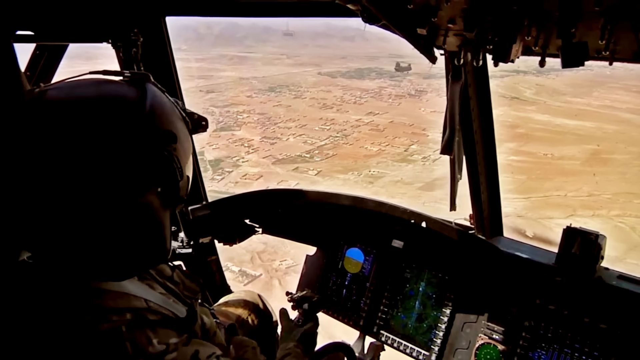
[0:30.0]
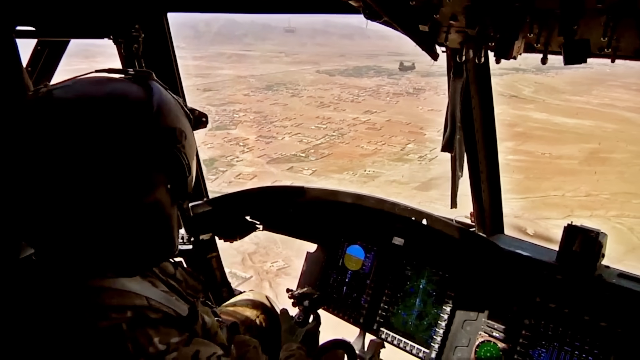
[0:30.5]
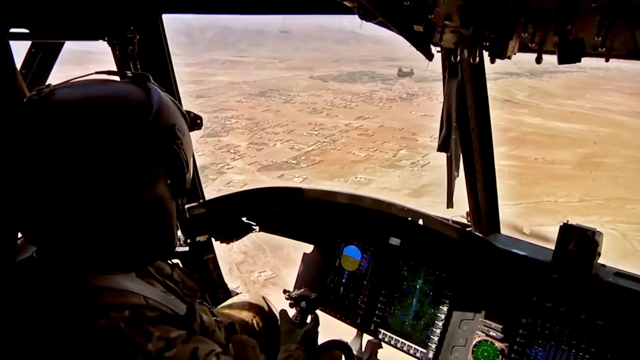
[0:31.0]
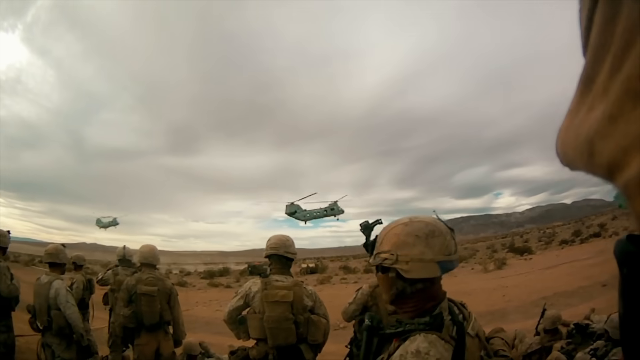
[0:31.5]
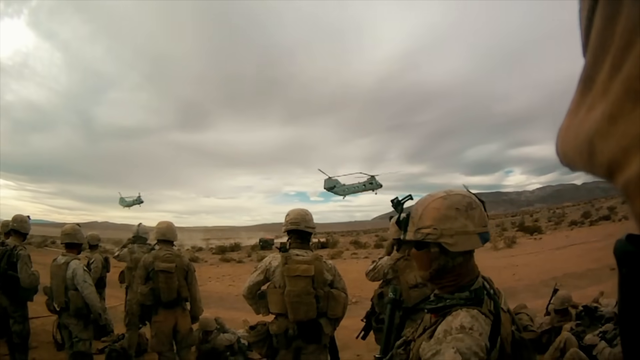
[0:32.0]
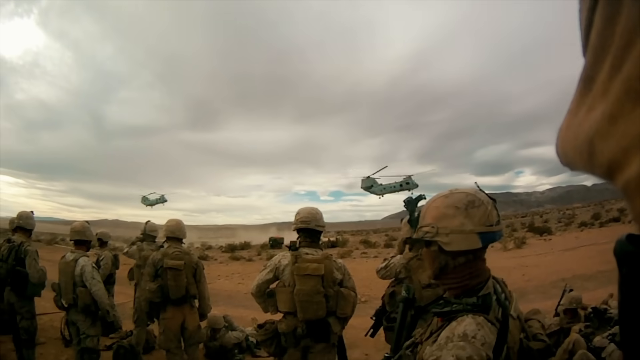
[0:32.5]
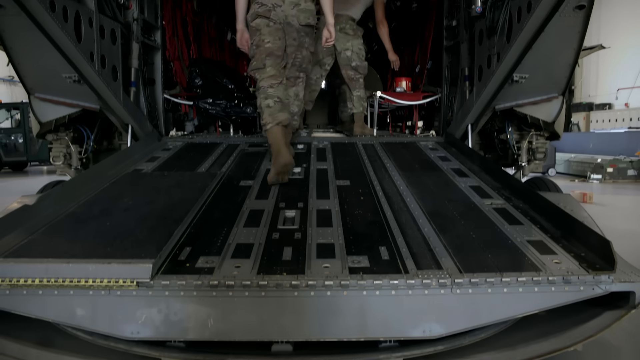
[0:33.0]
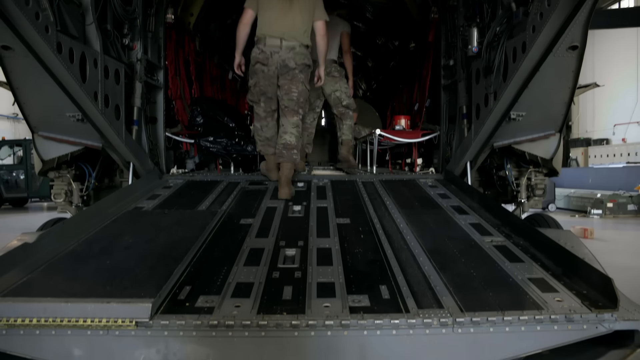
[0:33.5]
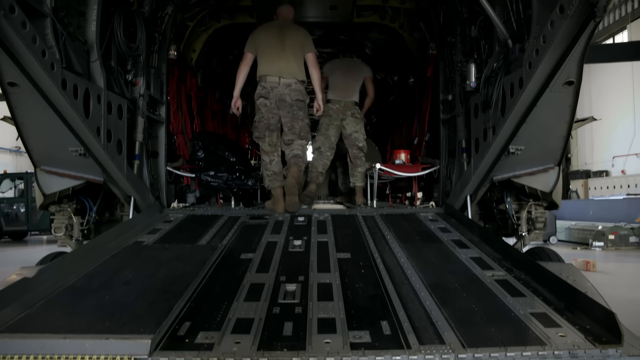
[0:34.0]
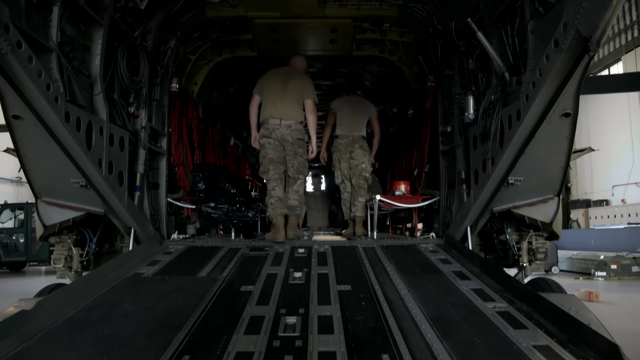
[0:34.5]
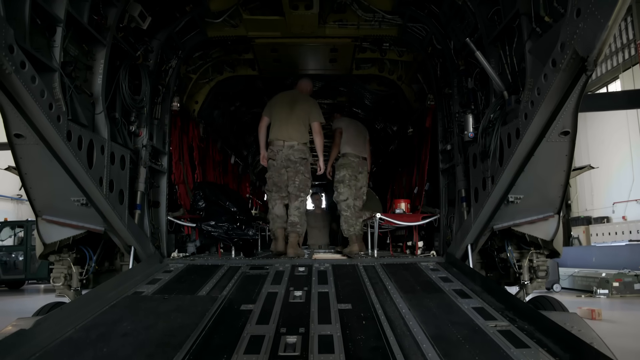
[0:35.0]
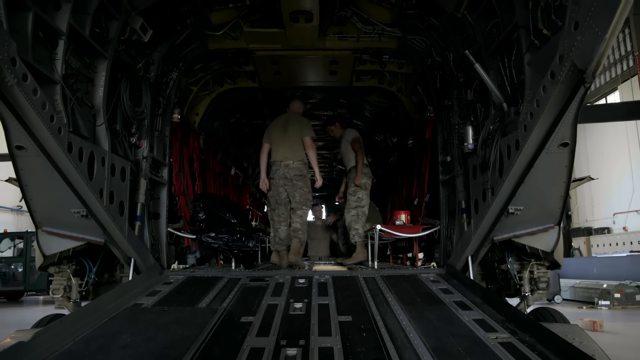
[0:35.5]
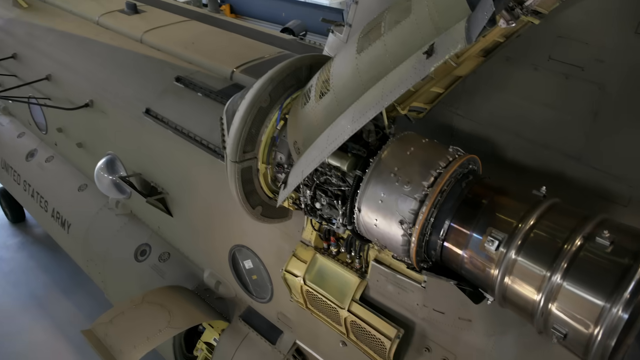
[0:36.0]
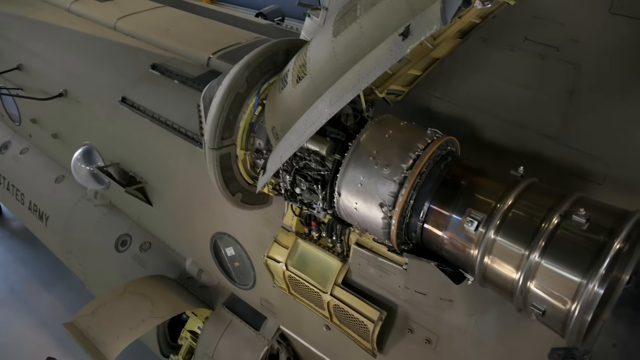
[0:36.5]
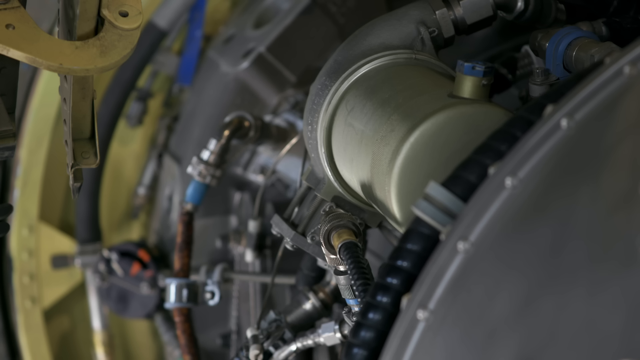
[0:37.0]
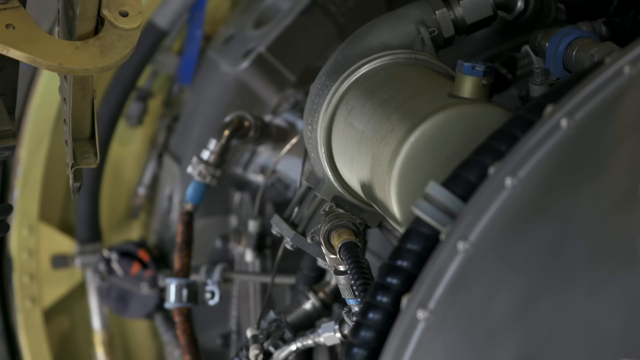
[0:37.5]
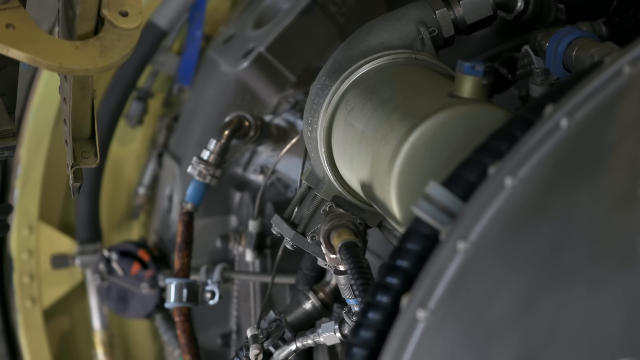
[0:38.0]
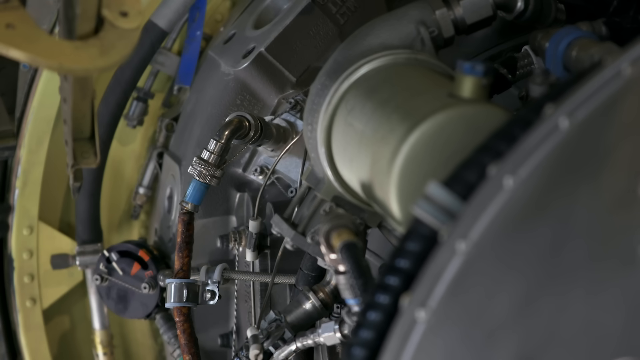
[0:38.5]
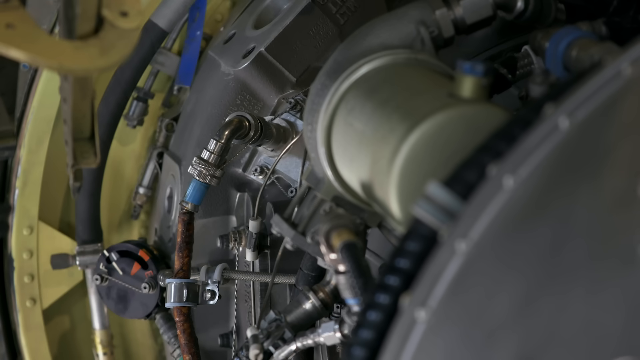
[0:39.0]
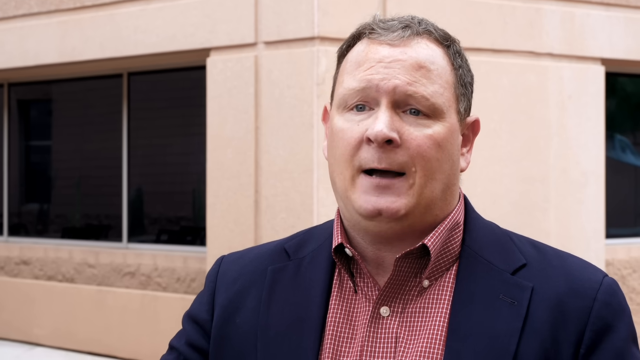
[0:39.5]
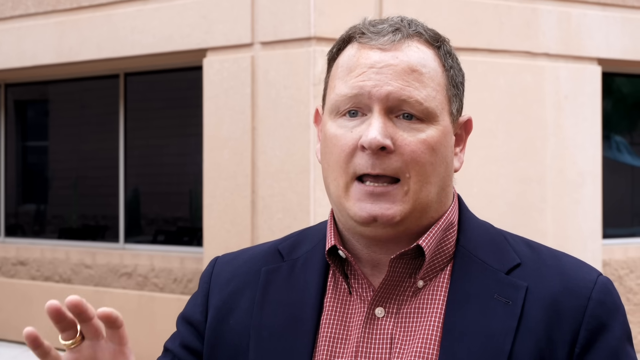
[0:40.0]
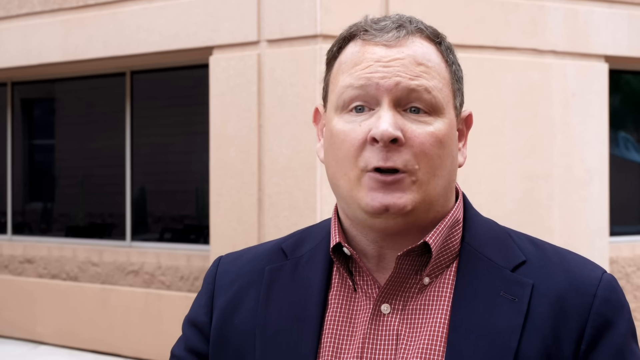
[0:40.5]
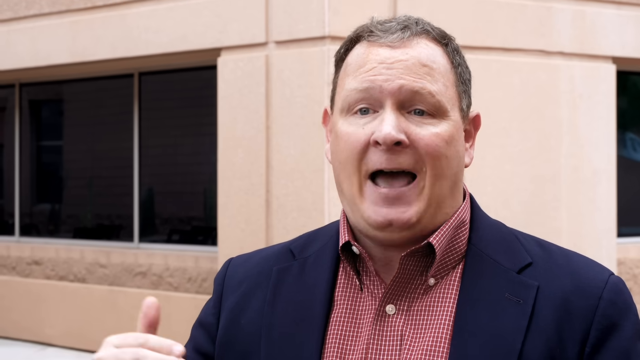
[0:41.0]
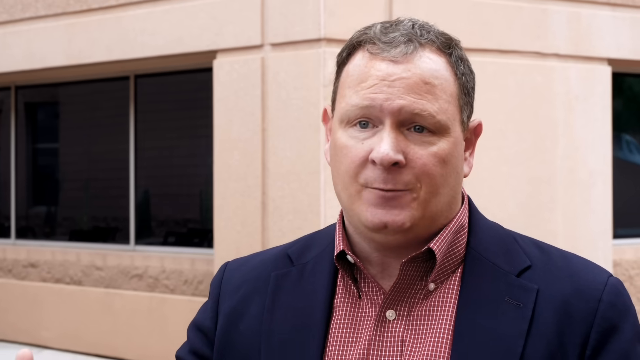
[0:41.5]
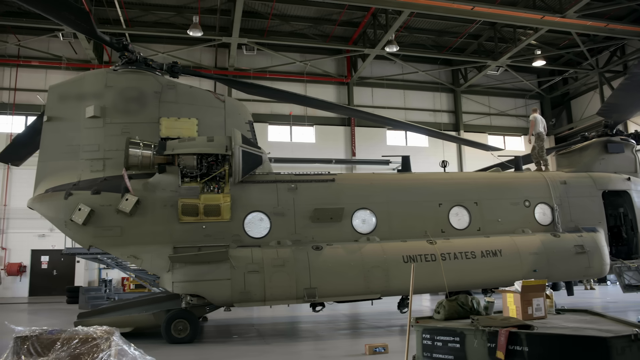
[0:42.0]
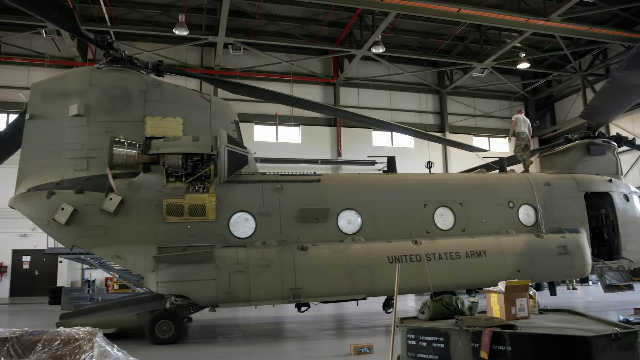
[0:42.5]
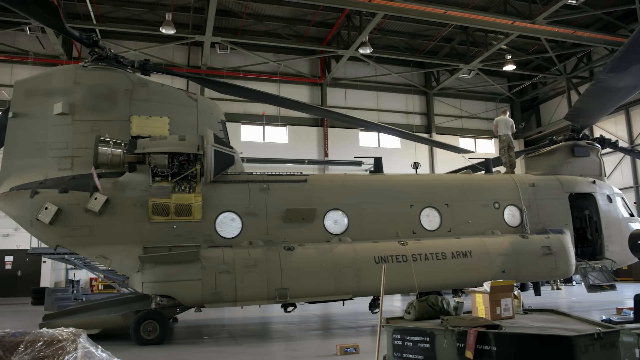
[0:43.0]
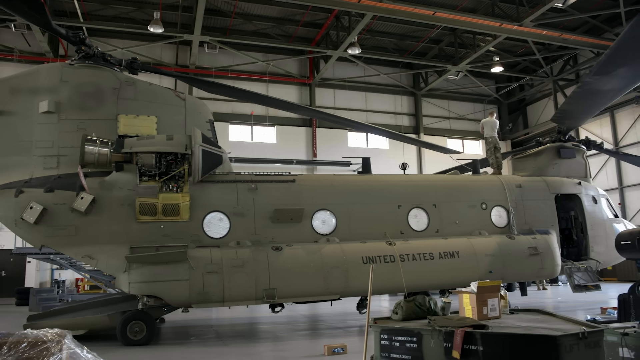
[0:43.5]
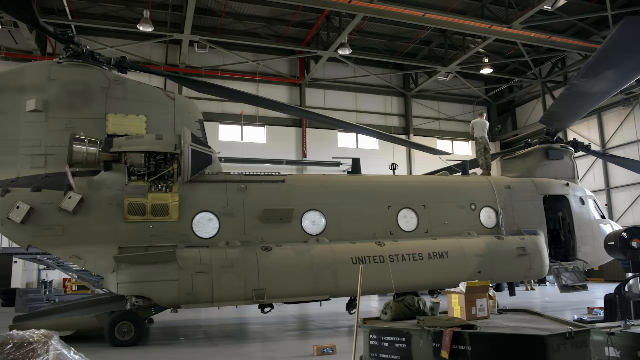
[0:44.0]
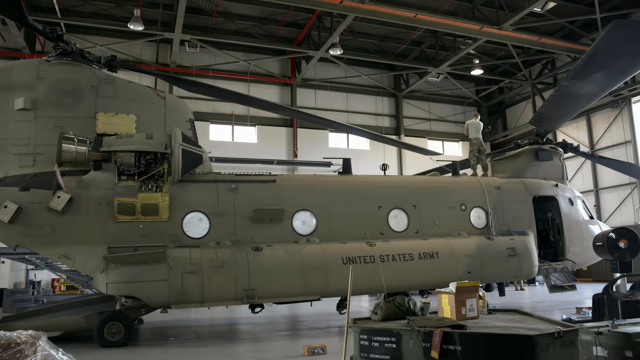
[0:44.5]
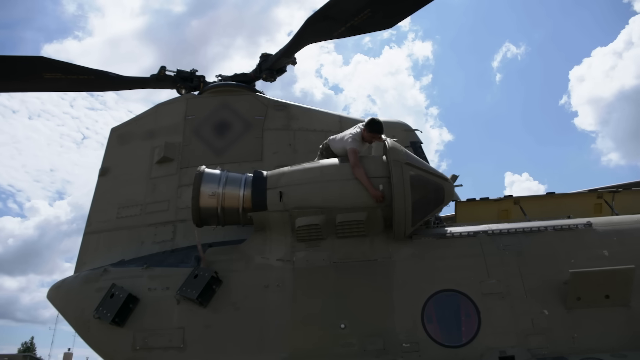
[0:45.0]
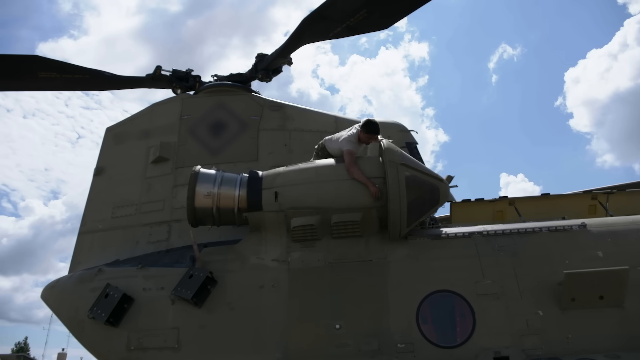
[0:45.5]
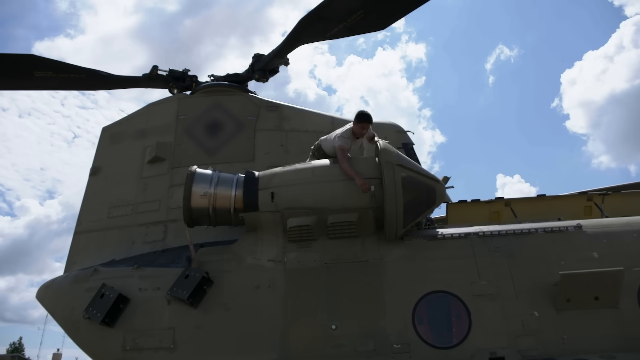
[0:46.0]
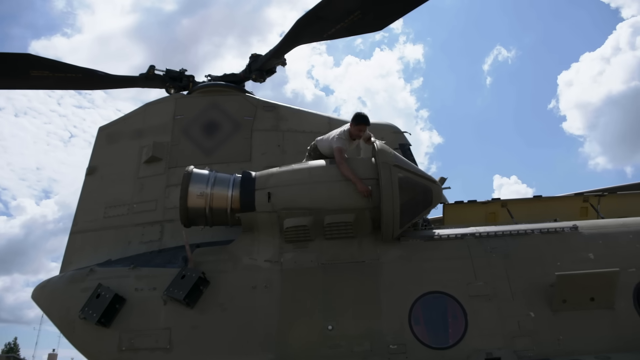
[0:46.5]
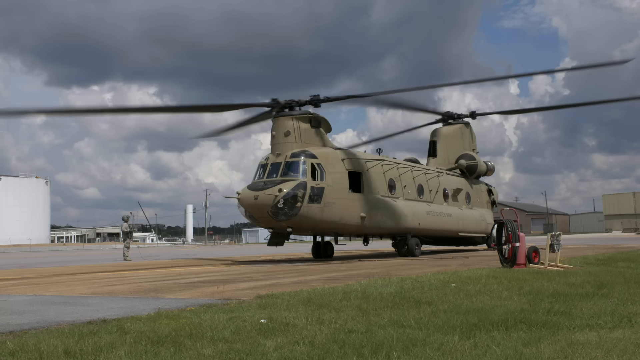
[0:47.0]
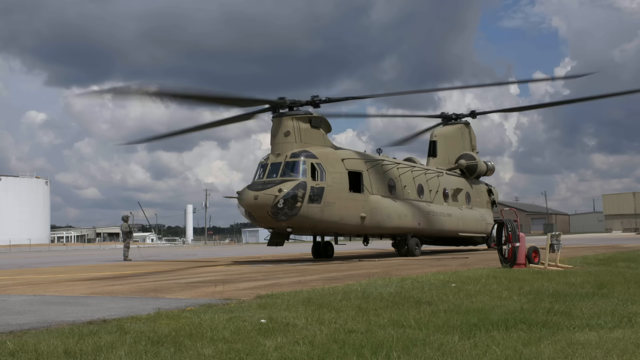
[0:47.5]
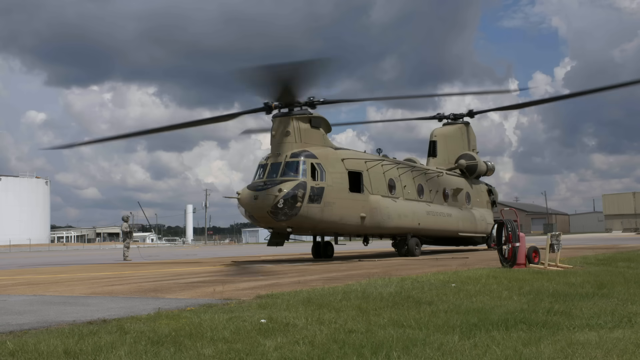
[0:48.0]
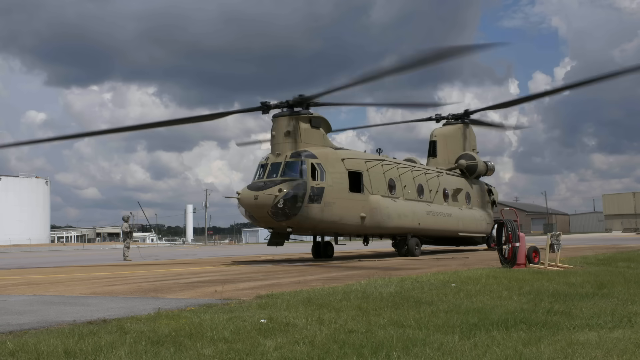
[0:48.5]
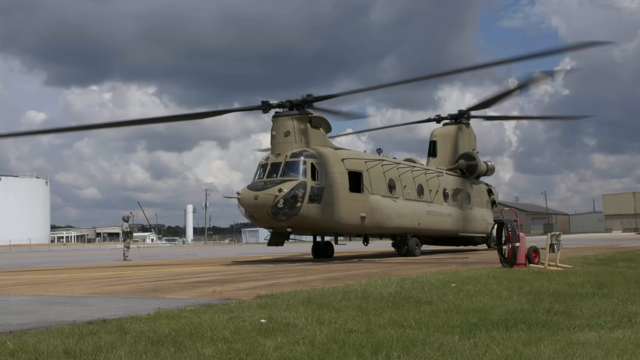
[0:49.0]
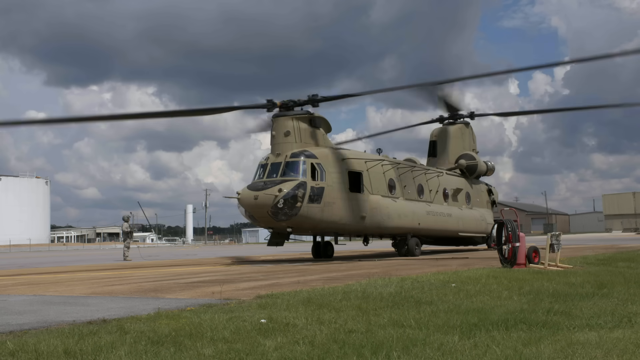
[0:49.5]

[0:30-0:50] The view from the driver's seat of an Army aircraft looks out the windshield and down at the ground. Army soldiers wait for the aircraft to land, looking at them. The aircraft is shown up close, with close-ups of the mechanisms inside its engine. A gentleman in a suit and a red and white shirt speaks. The aircraft is then inside a carrier, with a man on top at the front and one at the back. The aircraft is a helicopter with two propellers, one on the front and one on the back, which go around together. The aircraft flies very low. It opens in the back, where a door drops down, which is how the soldiers get on and off.